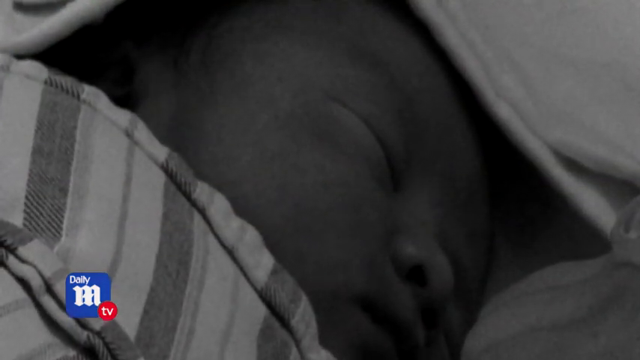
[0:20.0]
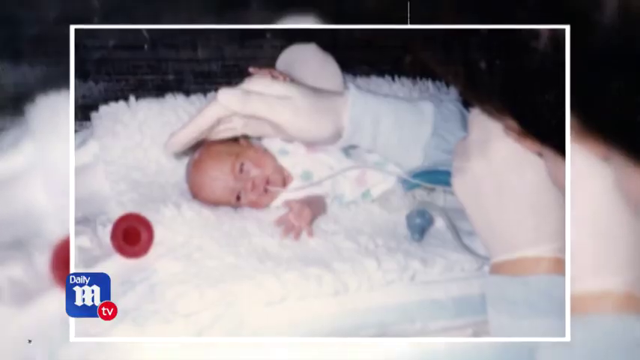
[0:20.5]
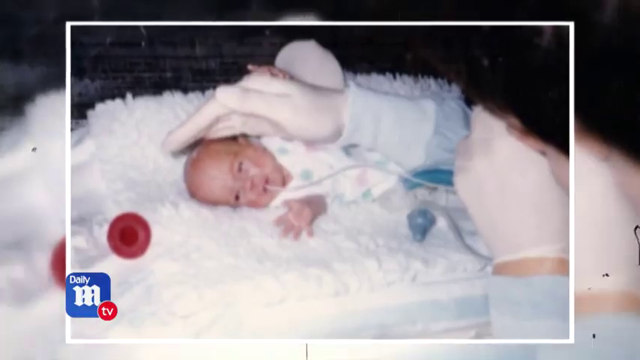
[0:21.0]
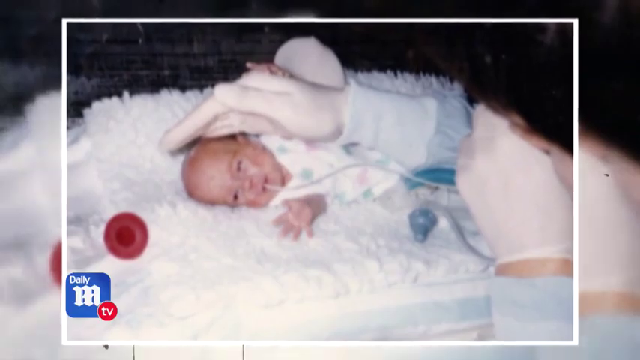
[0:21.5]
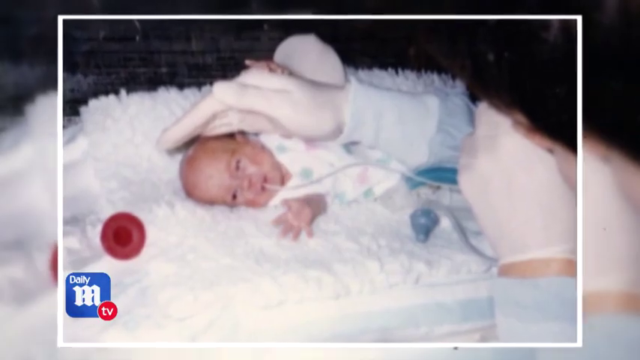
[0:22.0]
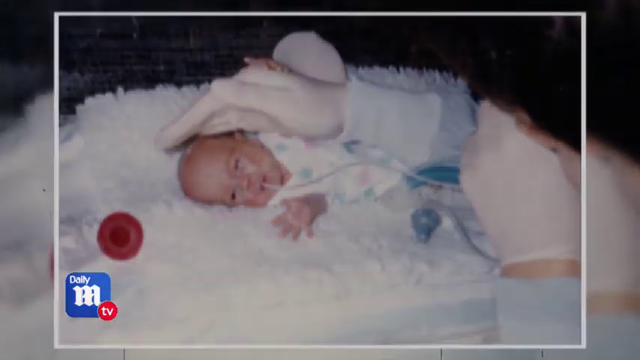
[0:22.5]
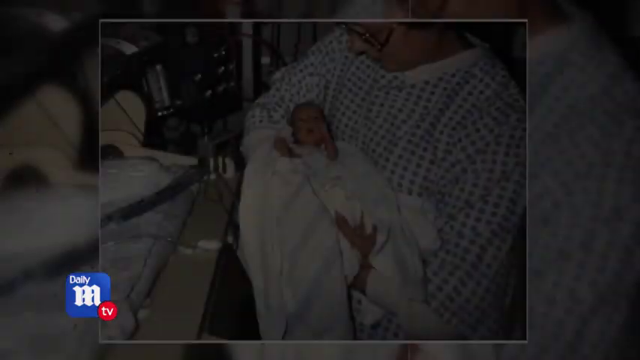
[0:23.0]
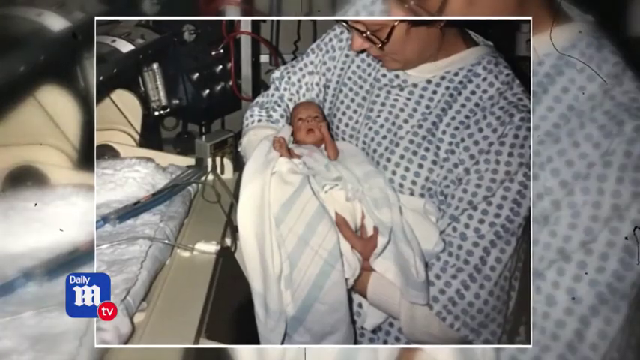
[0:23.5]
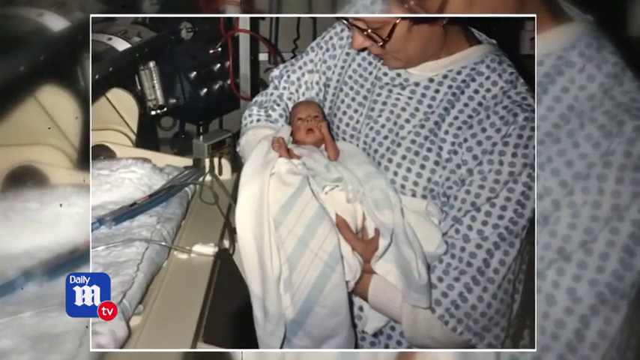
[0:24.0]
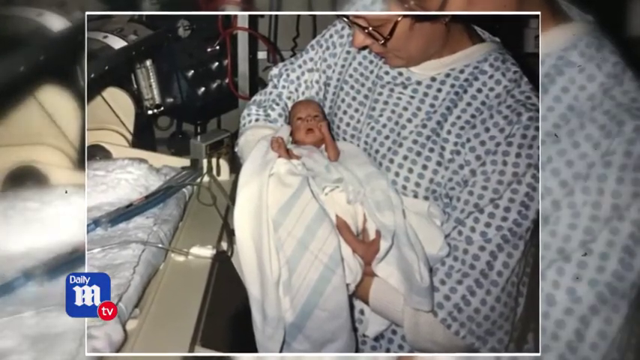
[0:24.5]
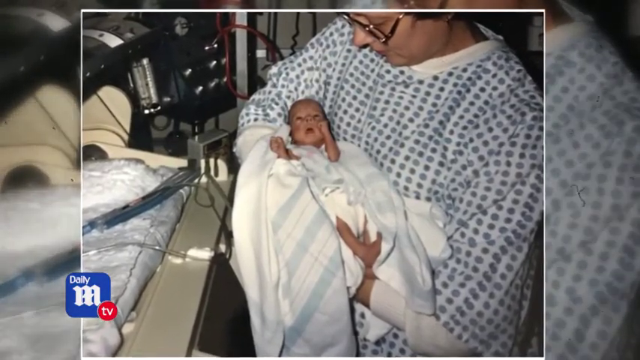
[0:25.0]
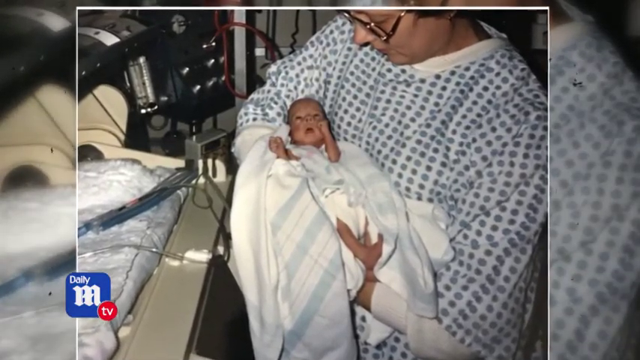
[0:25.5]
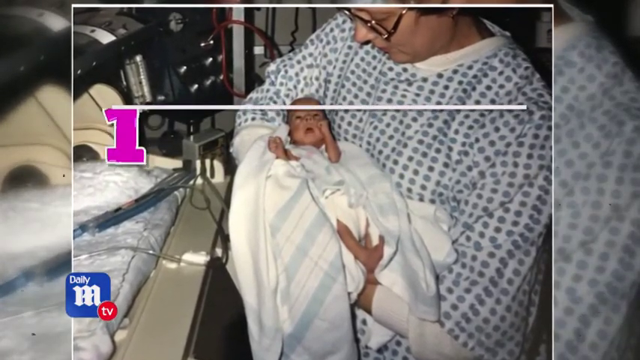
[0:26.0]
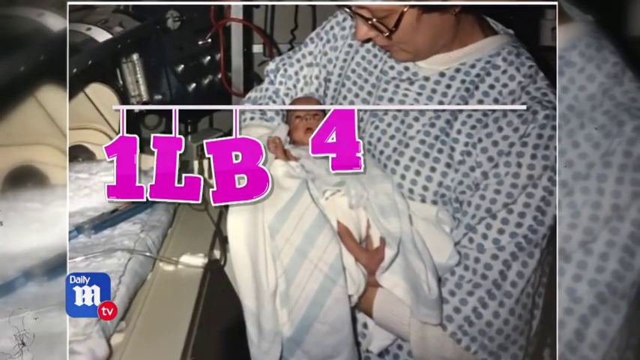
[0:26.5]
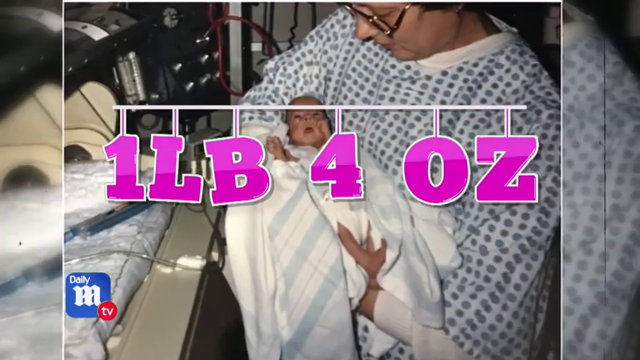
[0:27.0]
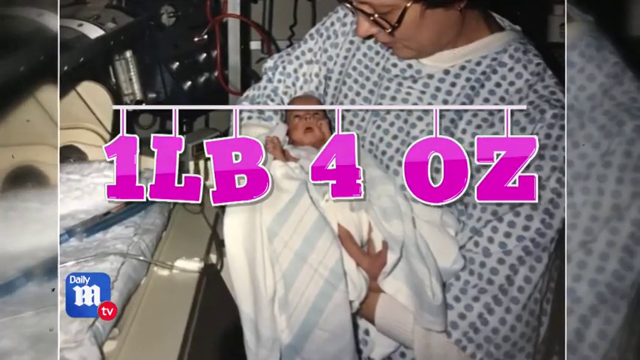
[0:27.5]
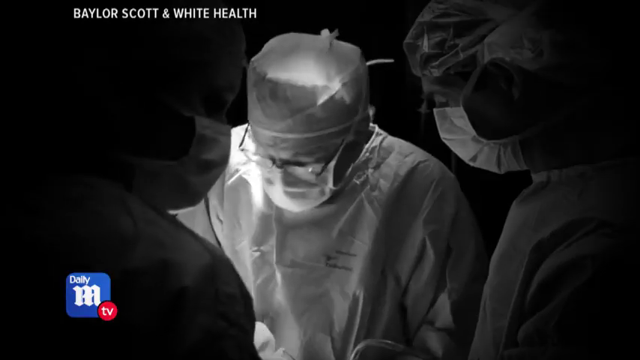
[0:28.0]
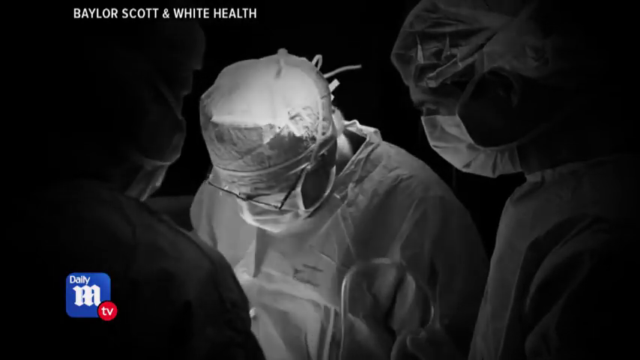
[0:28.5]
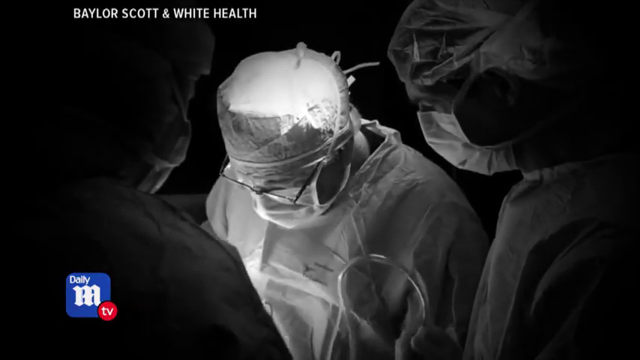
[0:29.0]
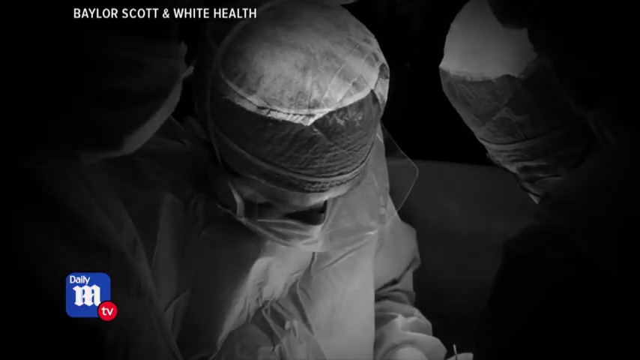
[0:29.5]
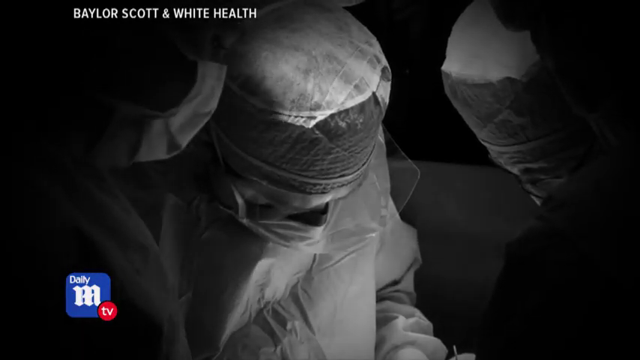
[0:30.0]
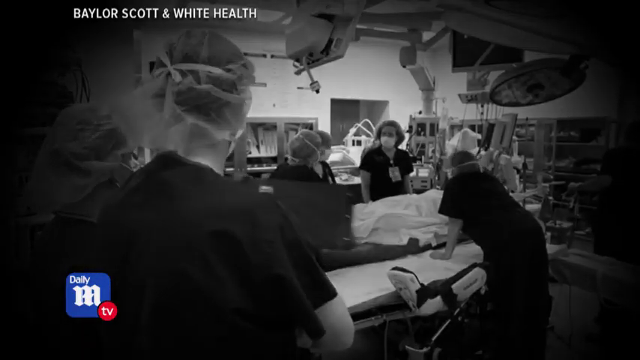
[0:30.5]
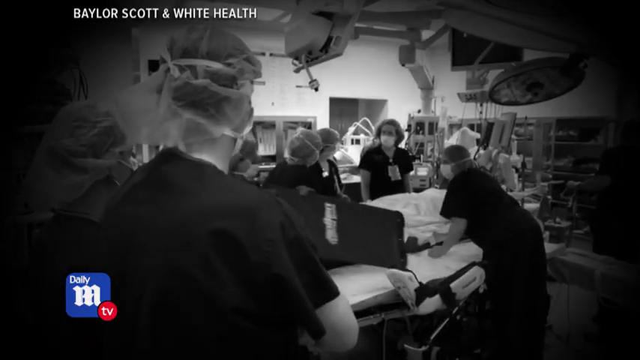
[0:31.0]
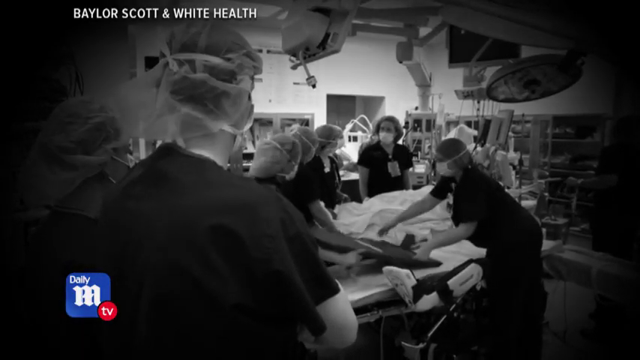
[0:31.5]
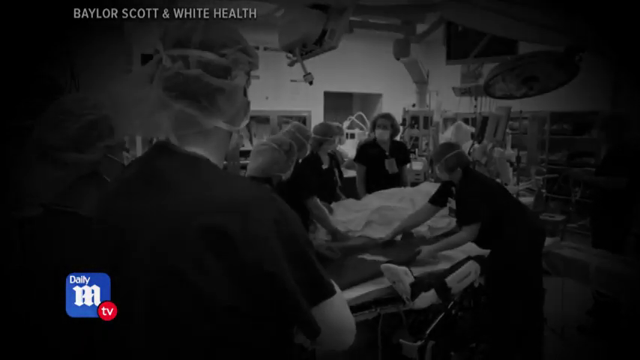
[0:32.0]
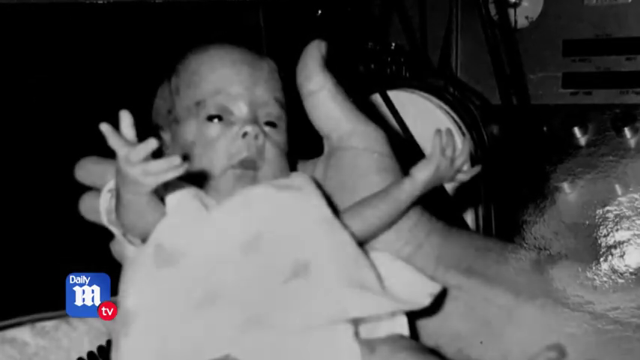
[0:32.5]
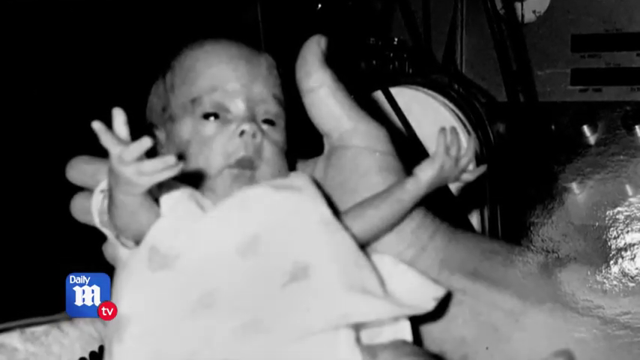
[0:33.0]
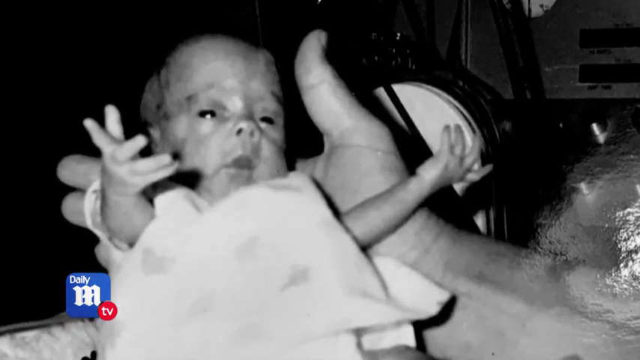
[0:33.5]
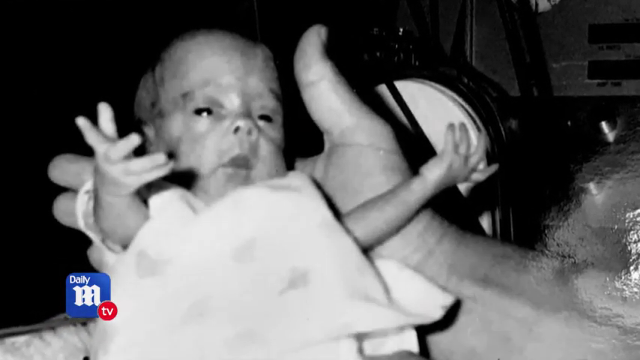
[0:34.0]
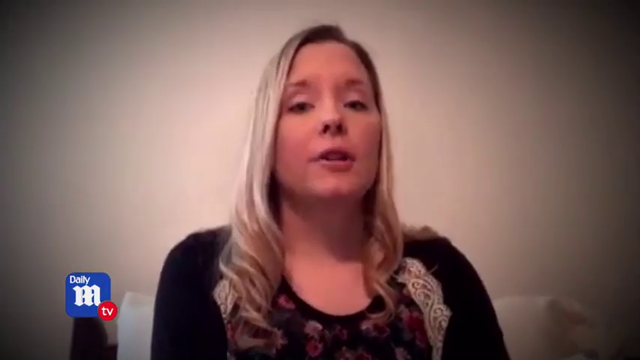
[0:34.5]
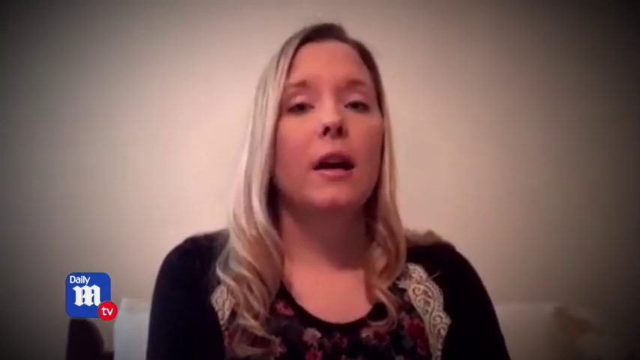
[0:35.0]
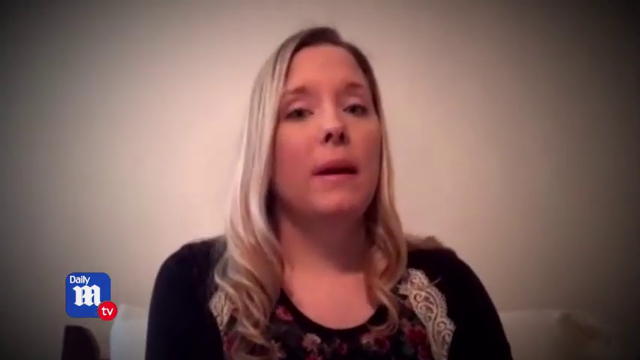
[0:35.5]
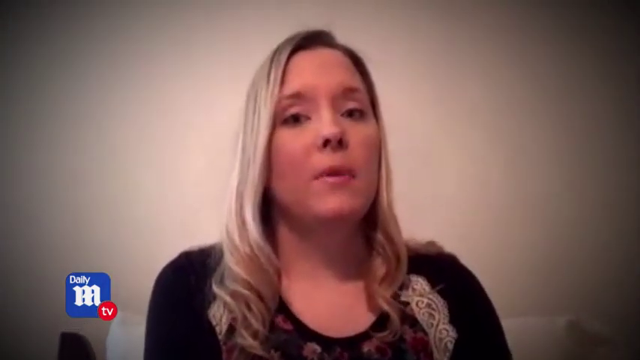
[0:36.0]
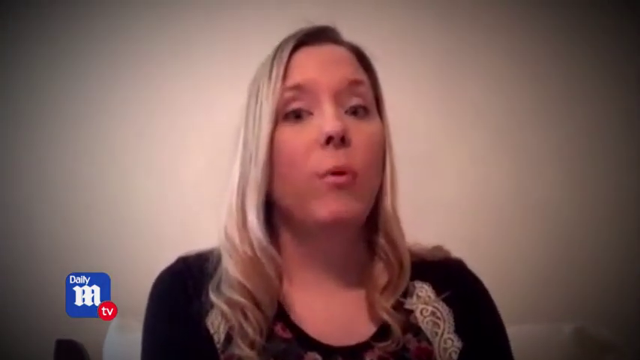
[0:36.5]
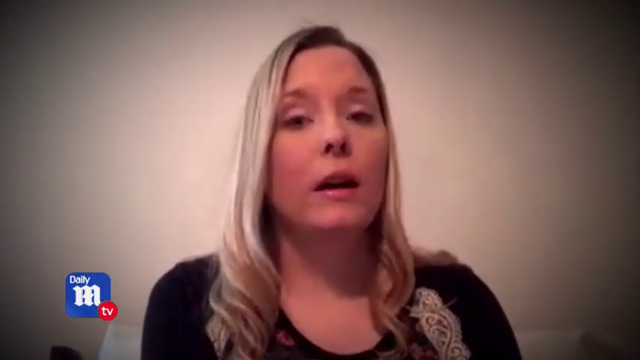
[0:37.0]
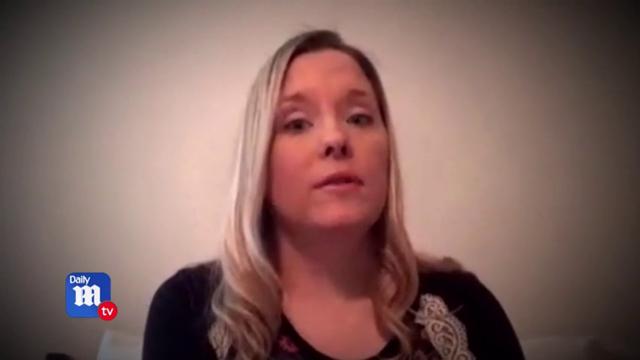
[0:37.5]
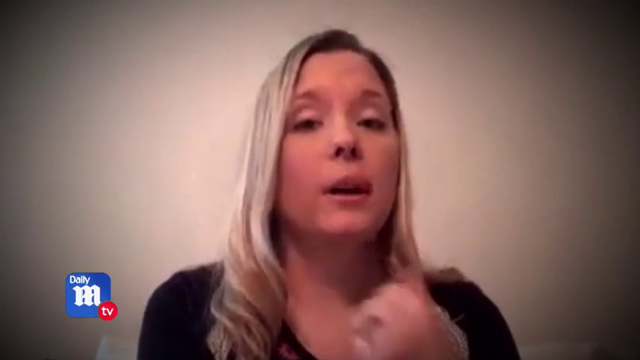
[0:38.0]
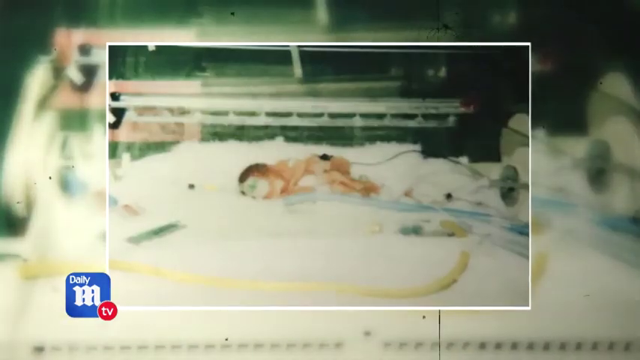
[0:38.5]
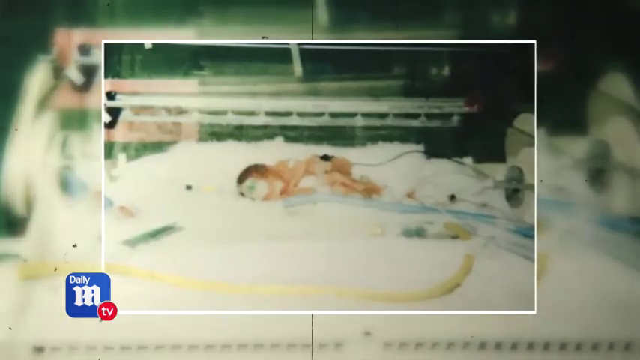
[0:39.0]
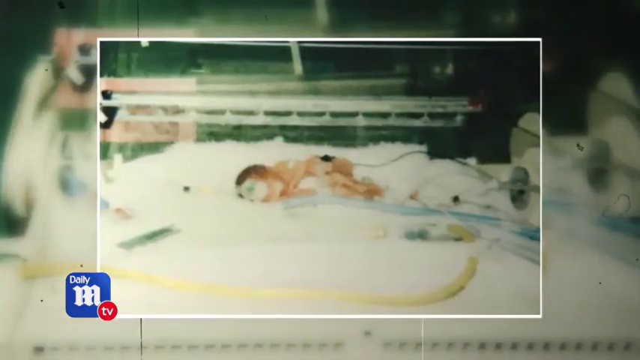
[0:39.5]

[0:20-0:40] Below the headline is an image of Tammy Lewis. Old pictures of her follow: the first is in black and white, and the second shows her with tubes in her mouth while sleeping on a fluffy blanket. Other images show her possibly with her parents, or with her mother who had just given birth; she is very tiny in her mother's arms, and above this picture is the text "1 pound and 4oz". Next, doctors in what appears to be a hospital room perform an operation on the mother. Then a black and white image shows the child, possibly Tammy, held in someone's hands, the same size as the hands. A person wearing a black dress is then interviewed.